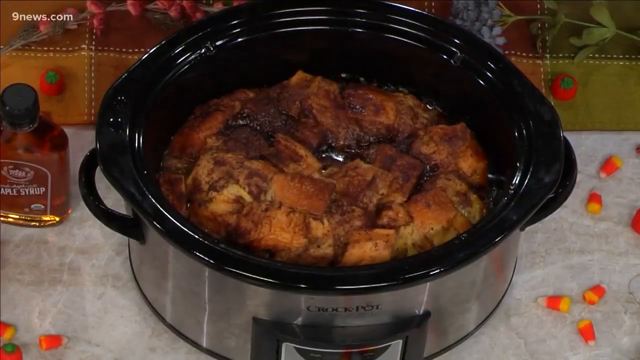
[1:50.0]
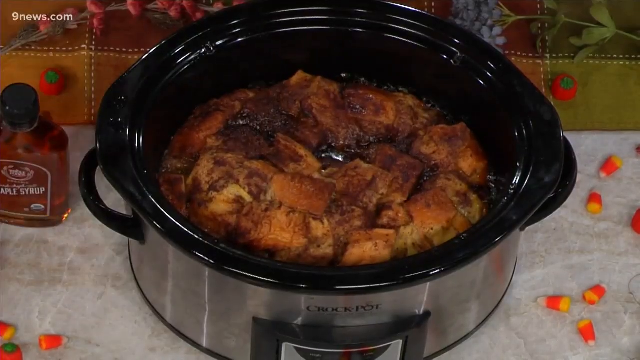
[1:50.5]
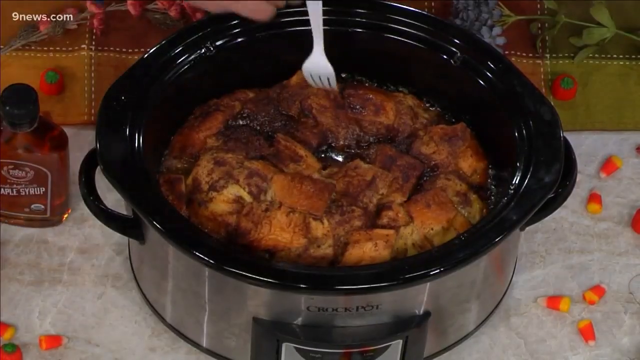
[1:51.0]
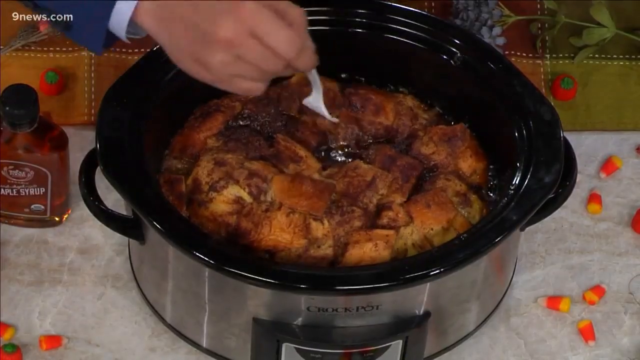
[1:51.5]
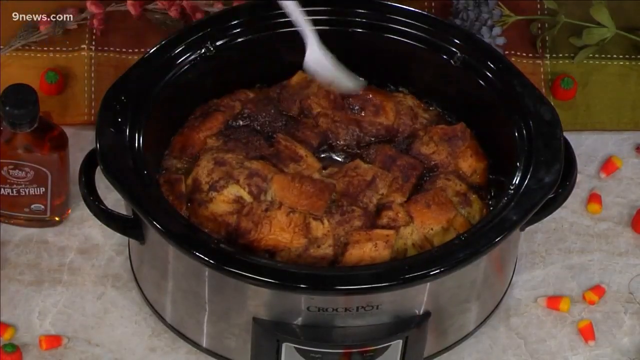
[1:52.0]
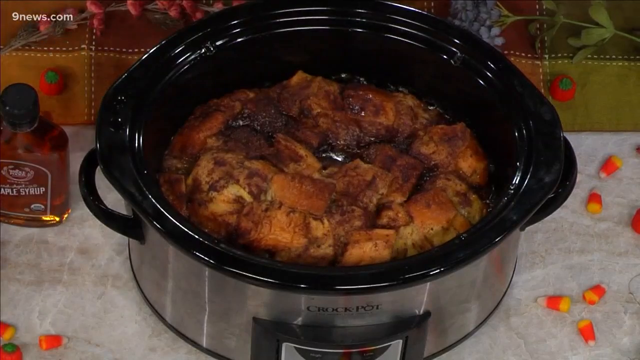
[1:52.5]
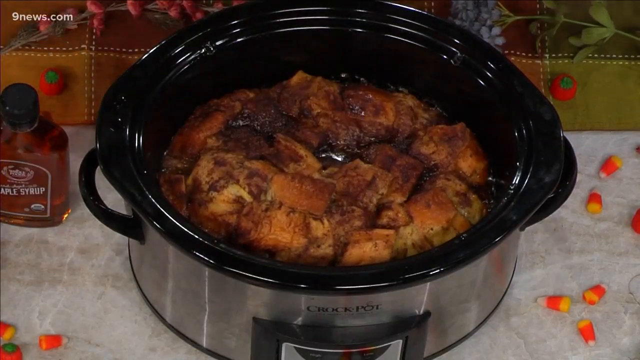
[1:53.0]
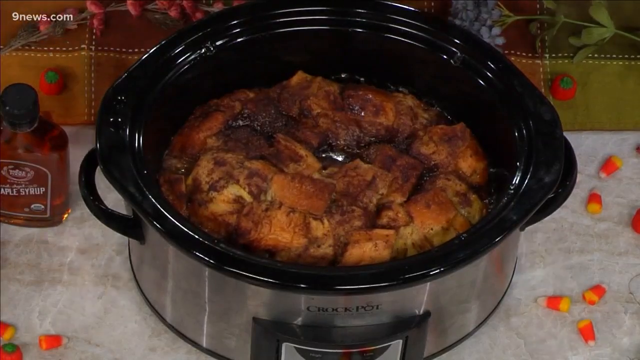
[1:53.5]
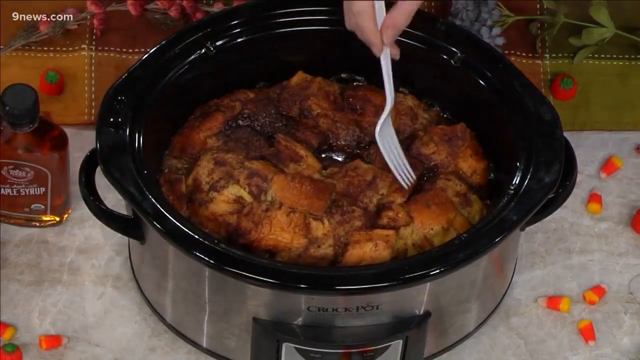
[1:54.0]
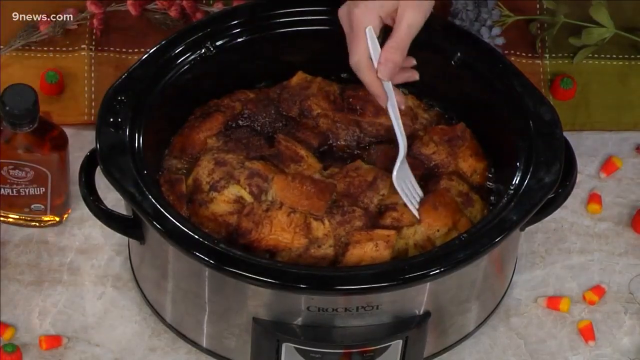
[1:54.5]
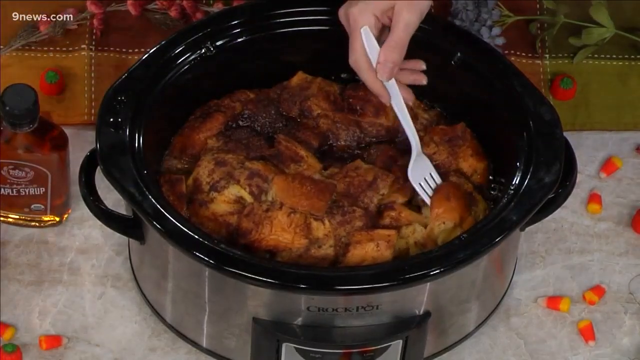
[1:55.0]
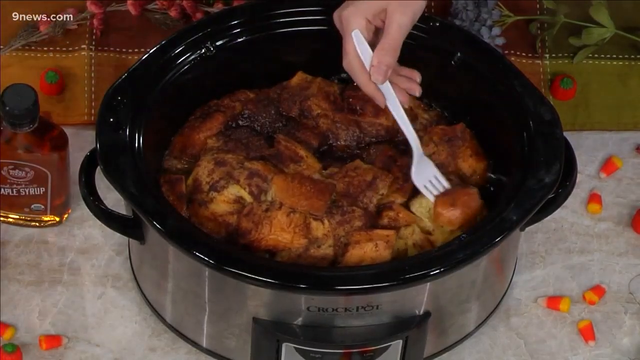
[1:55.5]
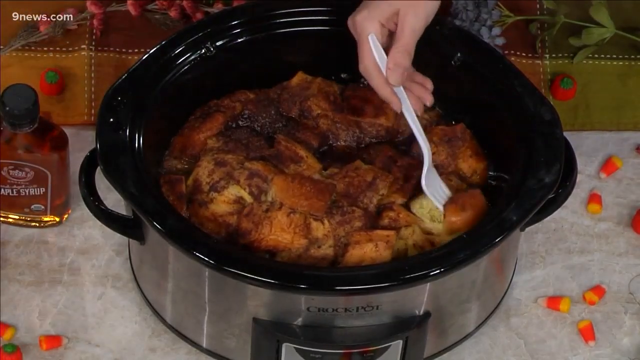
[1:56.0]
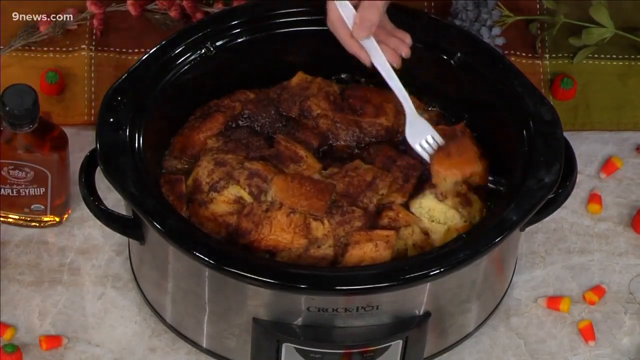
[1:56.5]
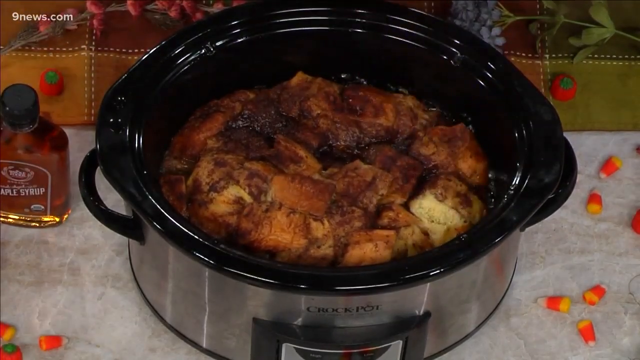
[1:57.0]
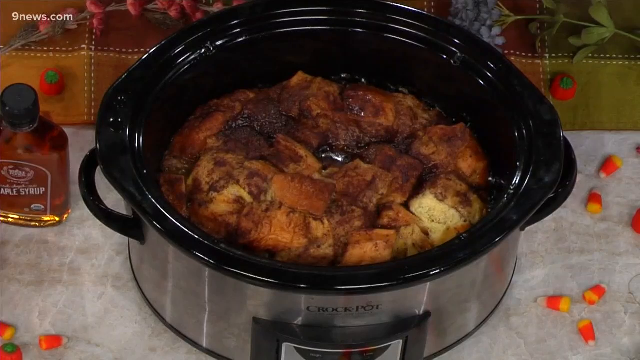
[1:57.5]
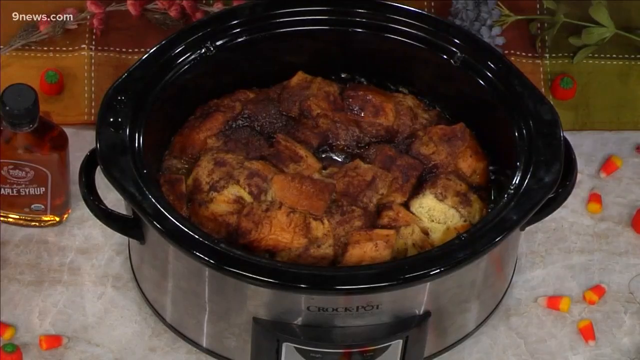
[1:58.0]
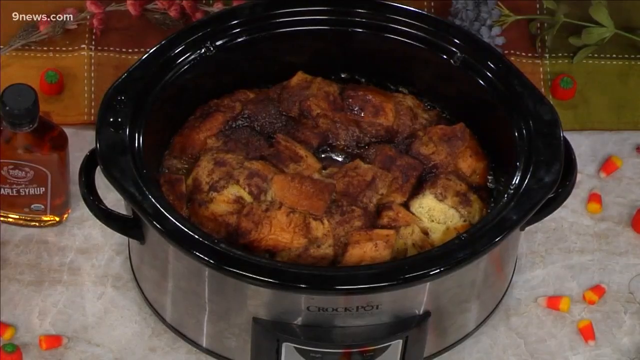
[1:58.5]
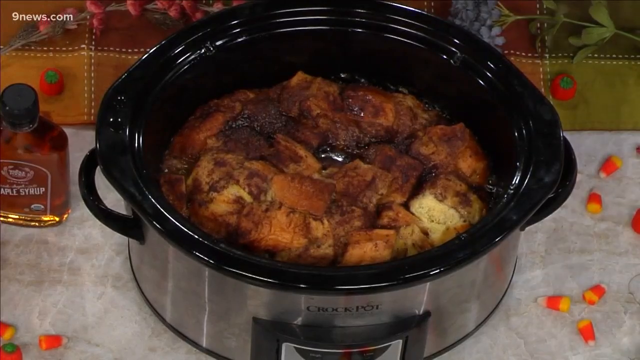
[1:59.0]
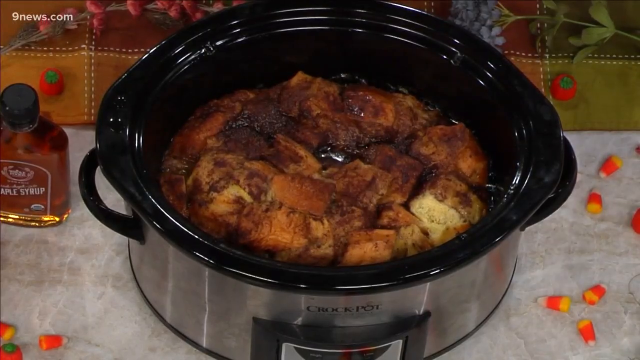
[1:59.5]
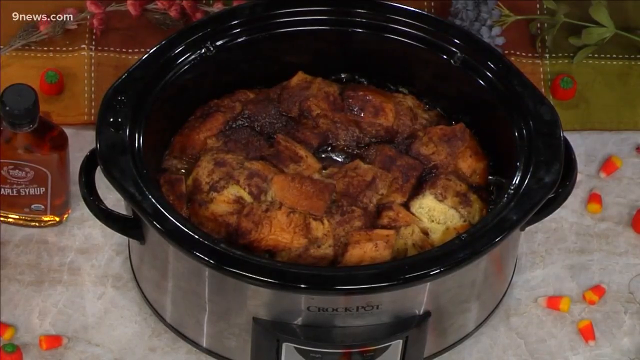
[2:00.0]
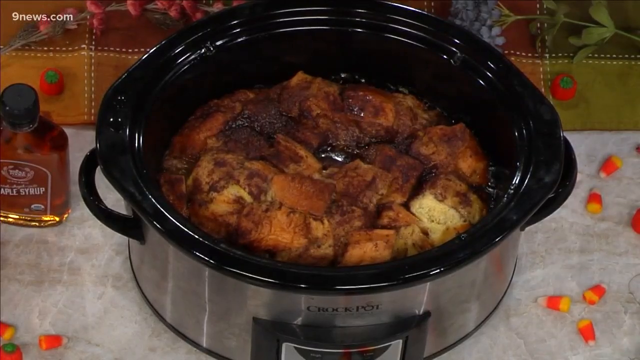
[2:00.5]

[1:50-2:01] A closer view shows the meat cooking inside the pot, which is black inside and silver on the outside with black handles. A person's hand reaches inside holding a white plastic fork and takes a little piece of the meat, apparently to taste it. The meat looks very well cooked, coming apart with just the fork and no knife. It sits in colourless juice, maybe oil, as the meat looks like it has been fried. On the left side is a small bottle with liquid inside that looks like oil. In the far right corner, "9 news.com" is written in white, very clear and visible.